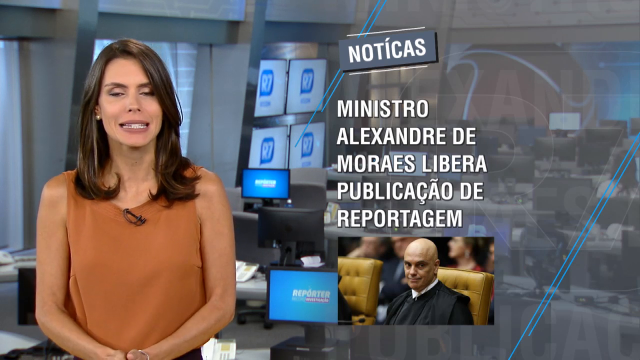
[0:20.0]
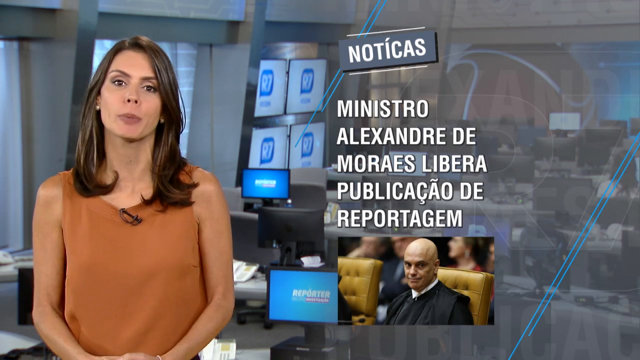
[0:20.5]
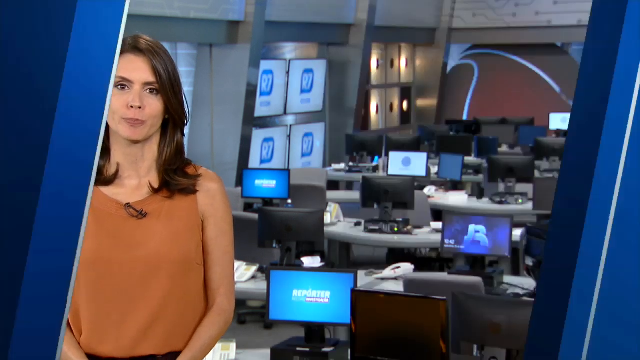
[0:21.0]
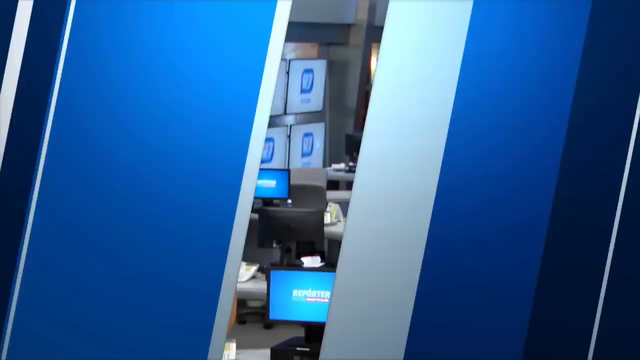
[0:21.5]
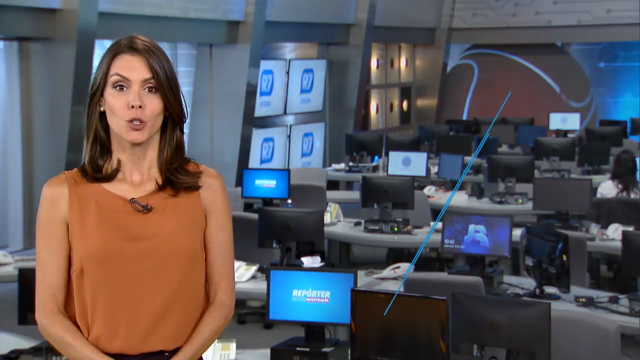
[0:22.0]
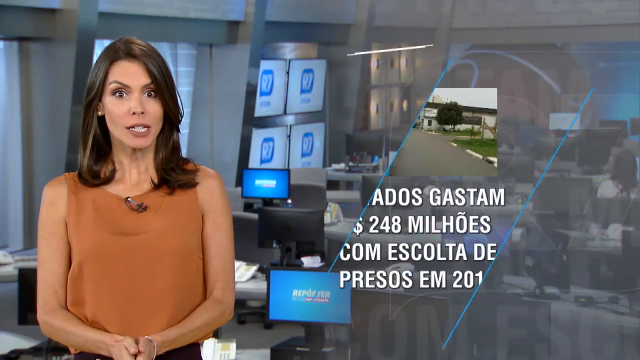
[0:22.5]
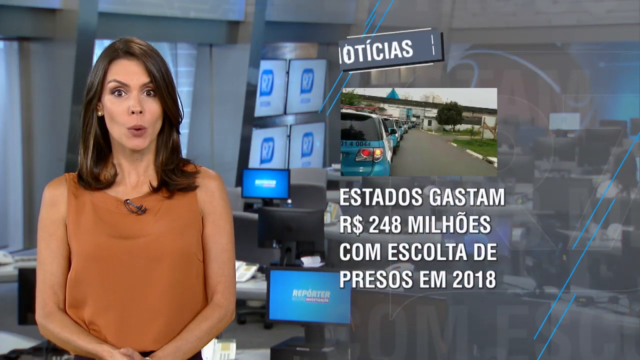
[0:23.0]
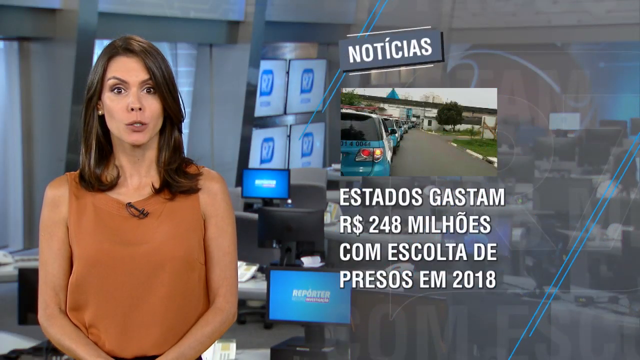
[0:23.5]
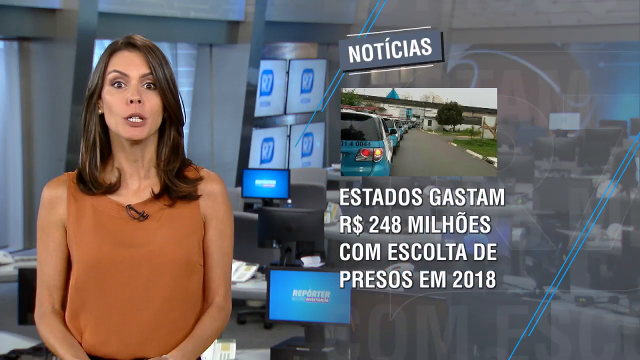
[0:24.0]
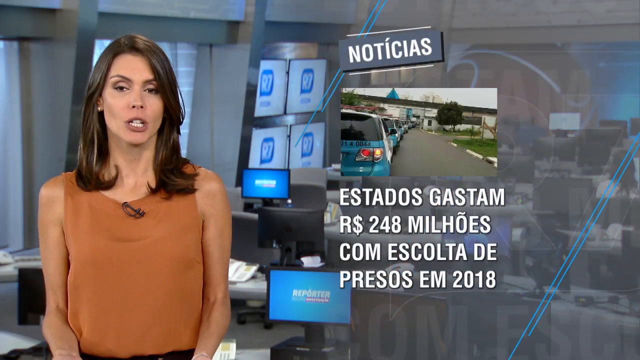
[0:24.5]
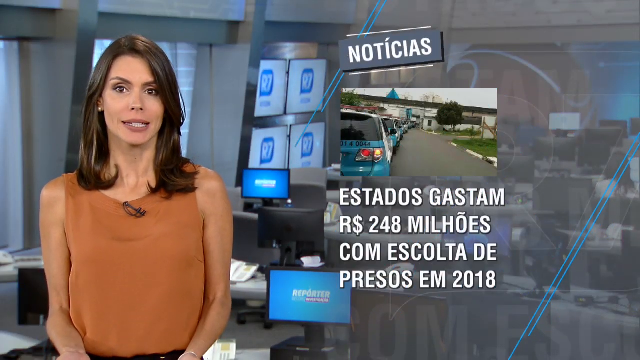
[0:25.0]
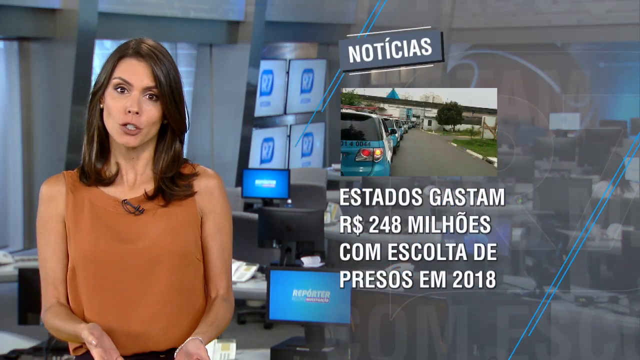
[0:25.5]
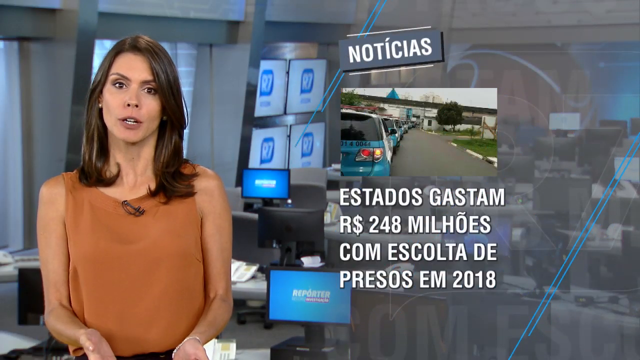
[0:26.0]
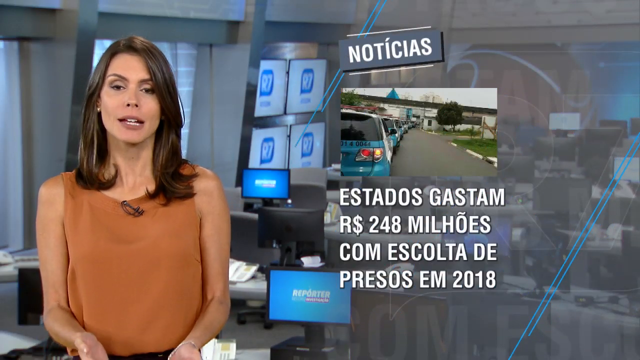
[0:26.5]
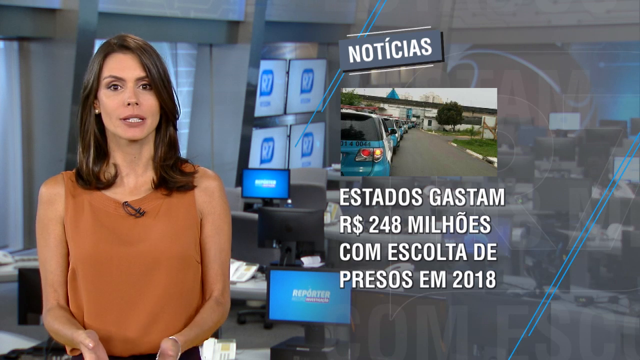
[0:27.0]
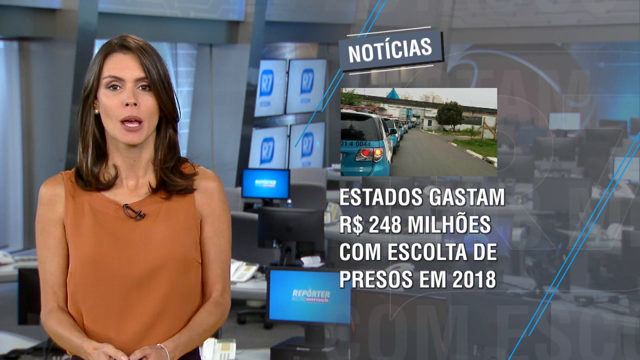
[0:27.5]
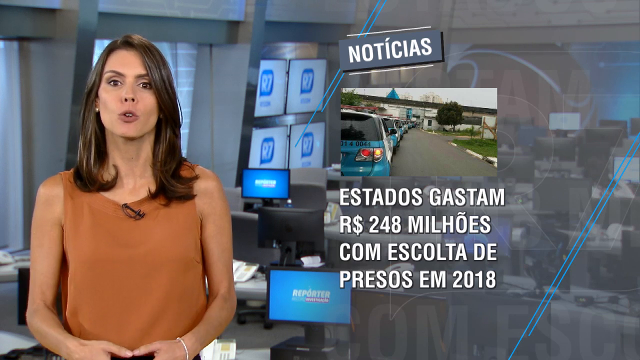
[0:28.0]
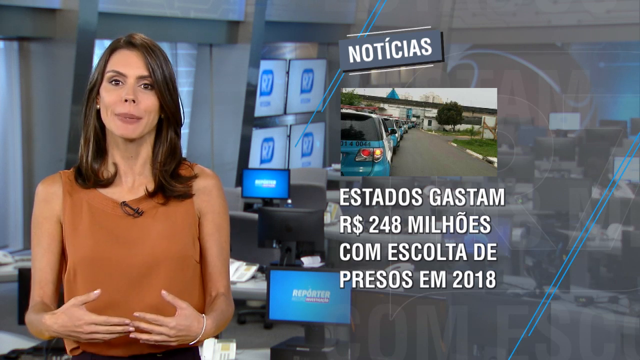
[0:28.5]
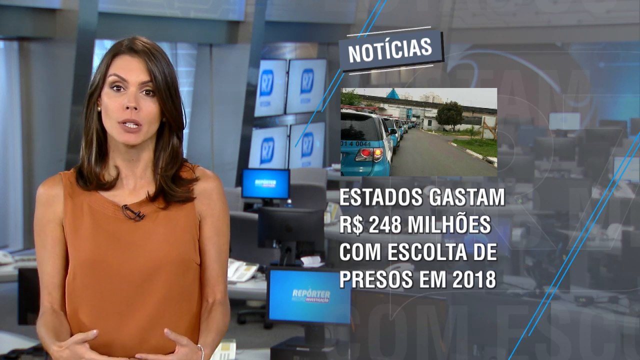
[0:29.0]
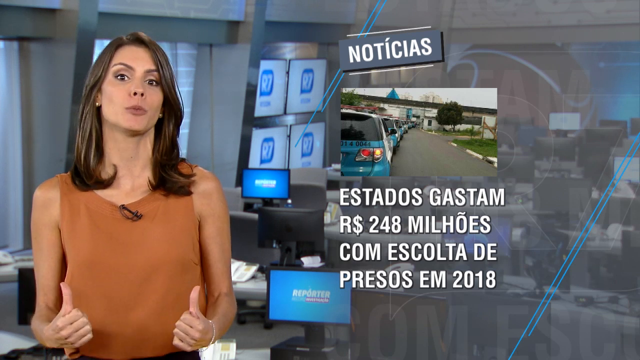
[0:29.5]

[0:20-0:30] A different news item appears, saying "the state spent millions on prisoner escorts in 2018," with a photo insert under "Noticias" showing a row of police cars on a freeway or stretch of road. The female newscaster on the left side delivers this story for a few seconds. Behind her is the newsroom, with many TV panels on the wall and computer monitors on long white desks.